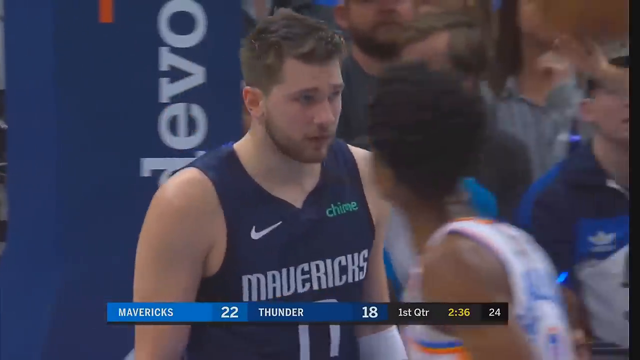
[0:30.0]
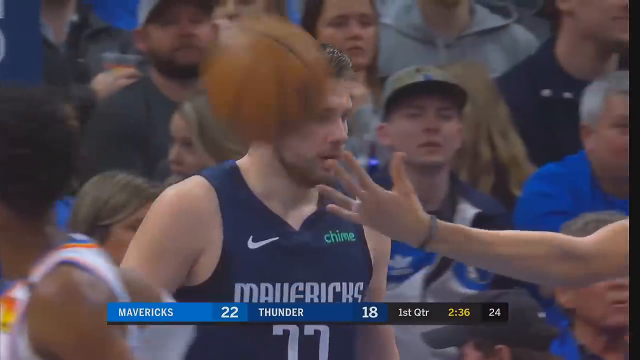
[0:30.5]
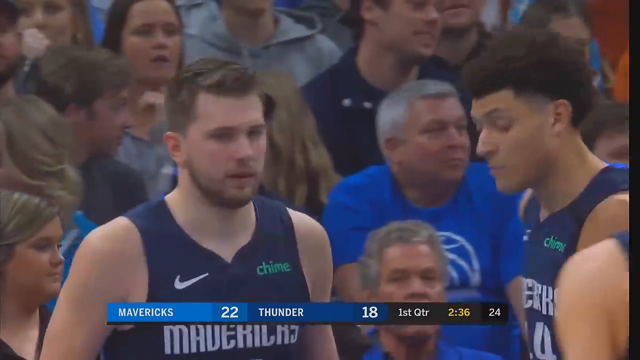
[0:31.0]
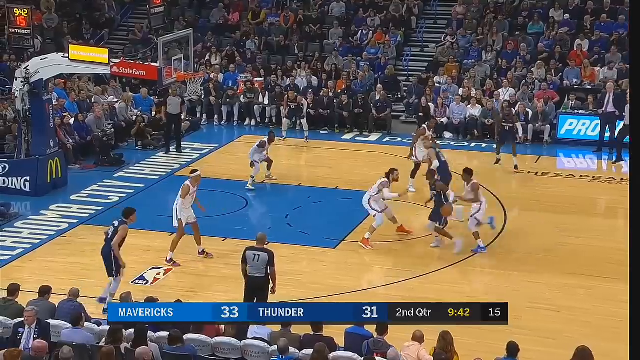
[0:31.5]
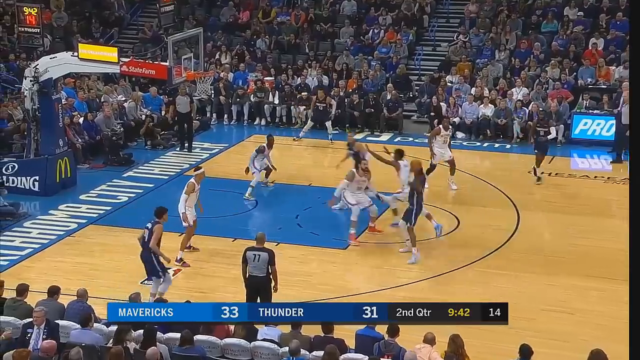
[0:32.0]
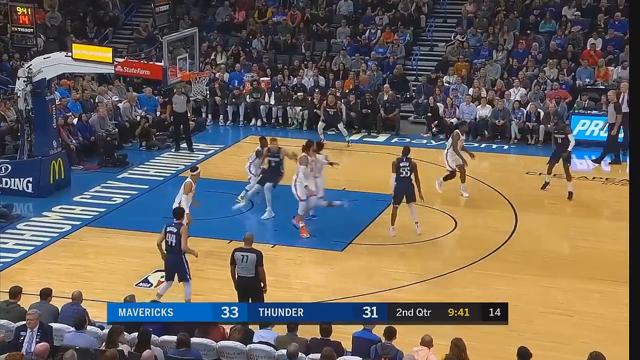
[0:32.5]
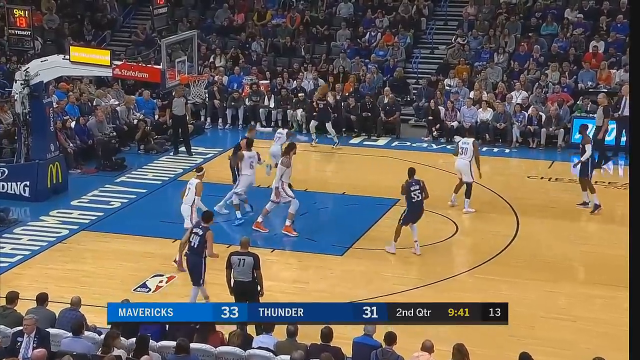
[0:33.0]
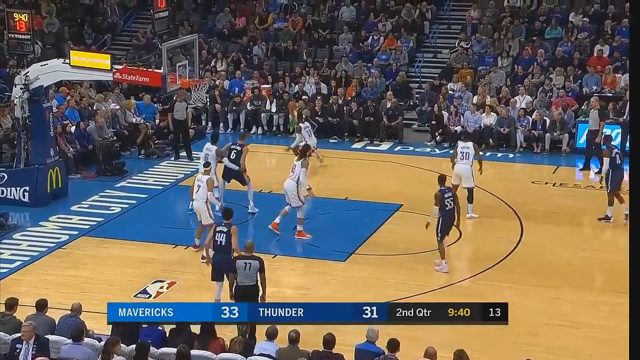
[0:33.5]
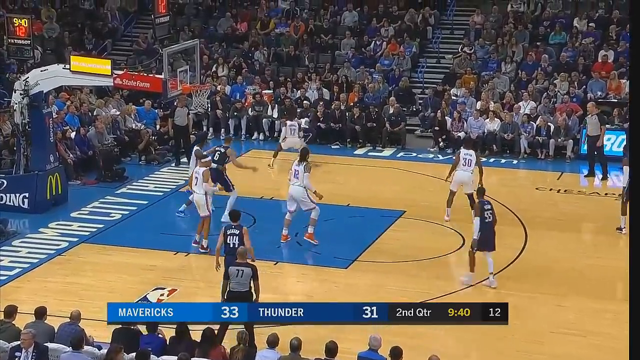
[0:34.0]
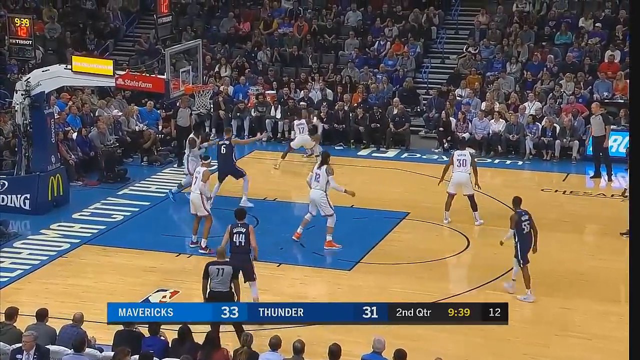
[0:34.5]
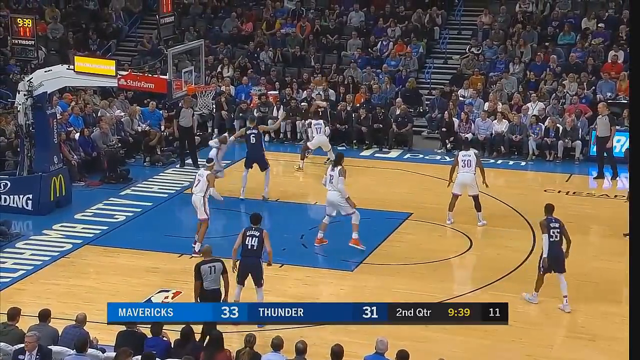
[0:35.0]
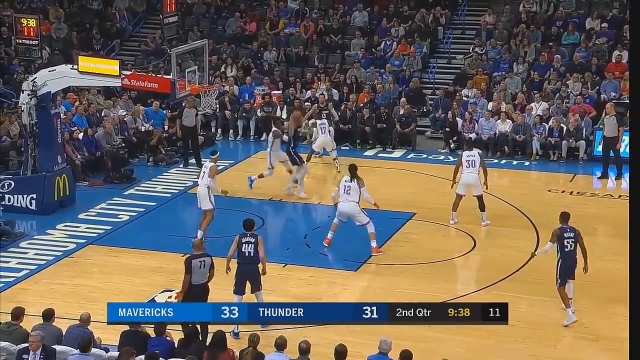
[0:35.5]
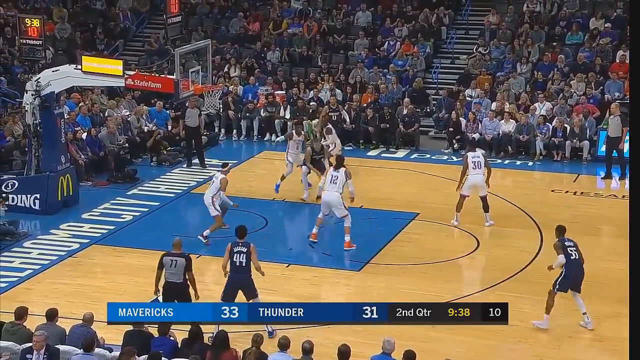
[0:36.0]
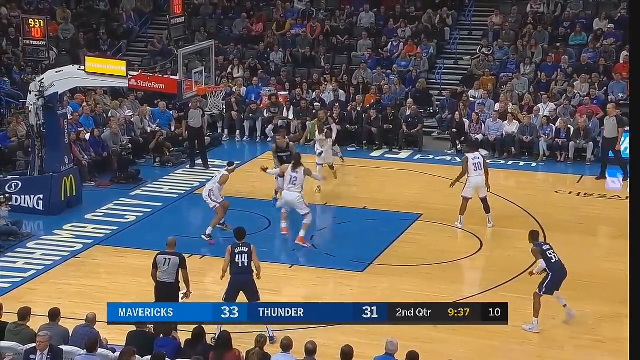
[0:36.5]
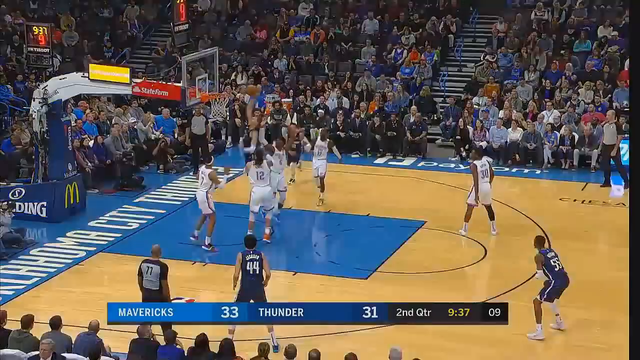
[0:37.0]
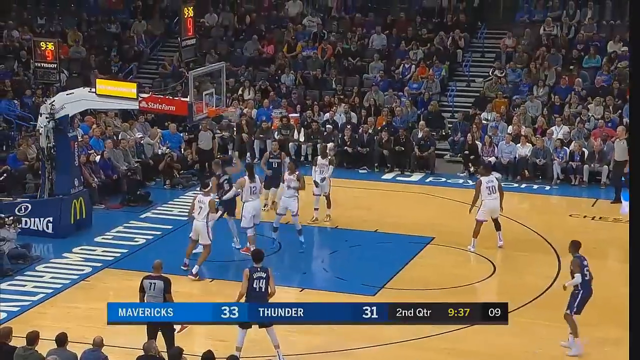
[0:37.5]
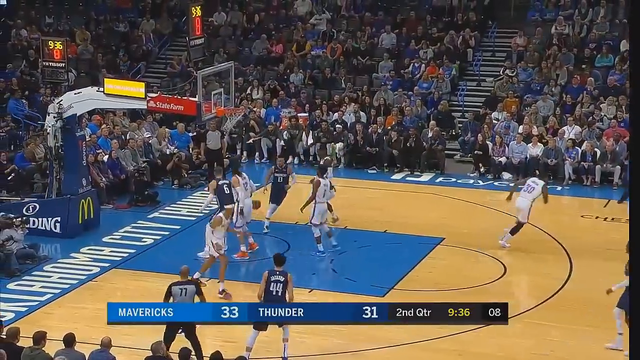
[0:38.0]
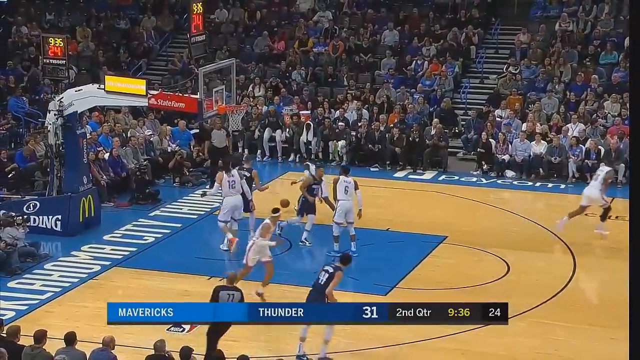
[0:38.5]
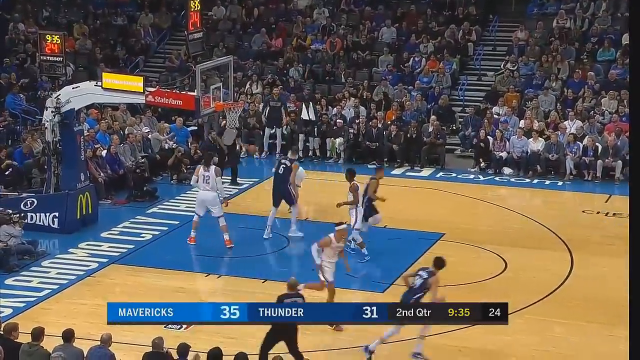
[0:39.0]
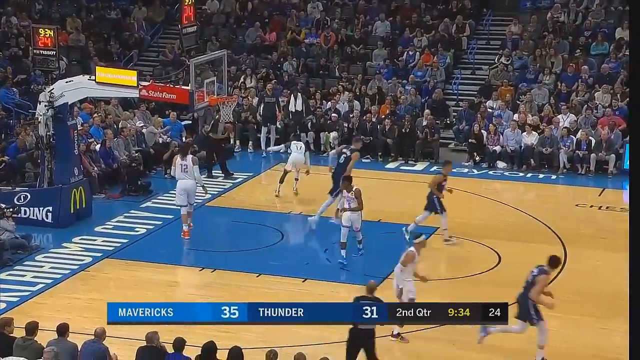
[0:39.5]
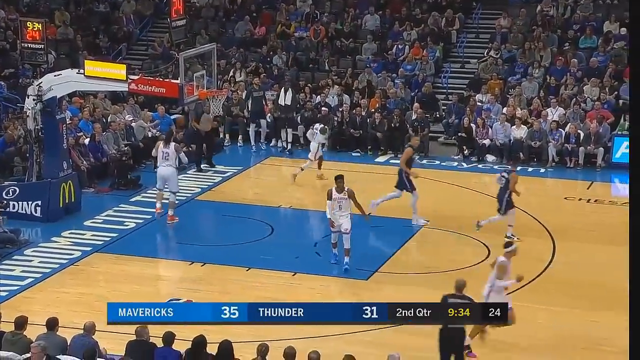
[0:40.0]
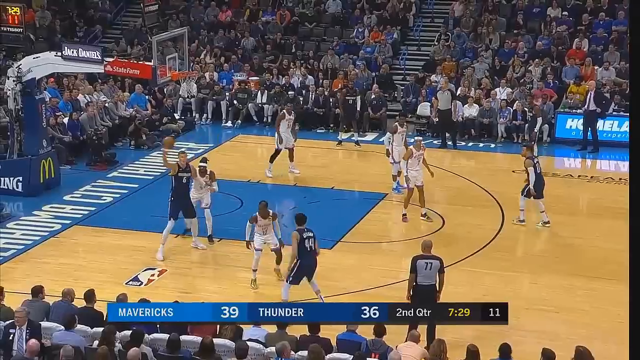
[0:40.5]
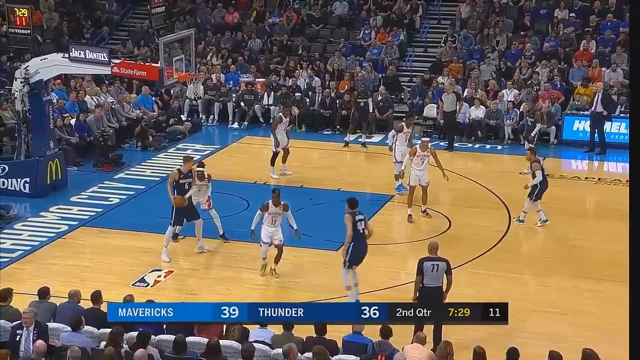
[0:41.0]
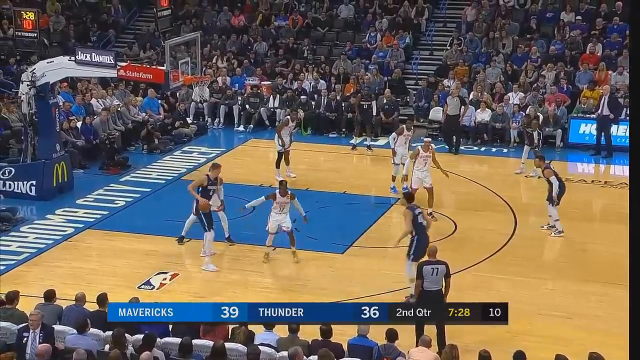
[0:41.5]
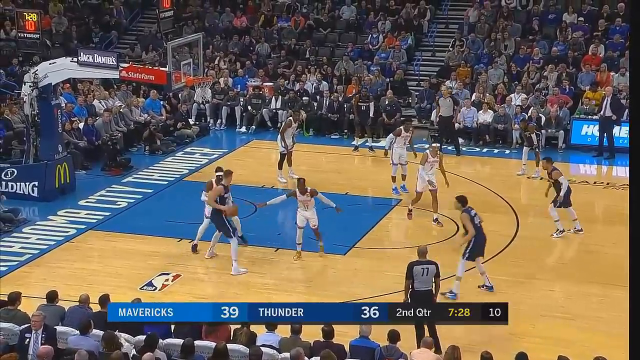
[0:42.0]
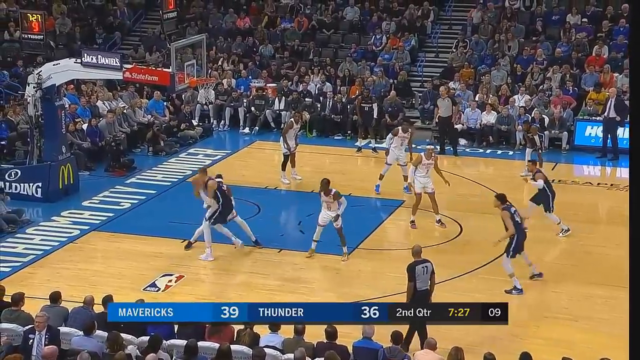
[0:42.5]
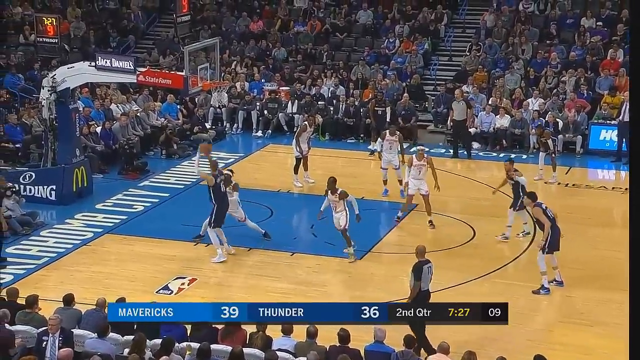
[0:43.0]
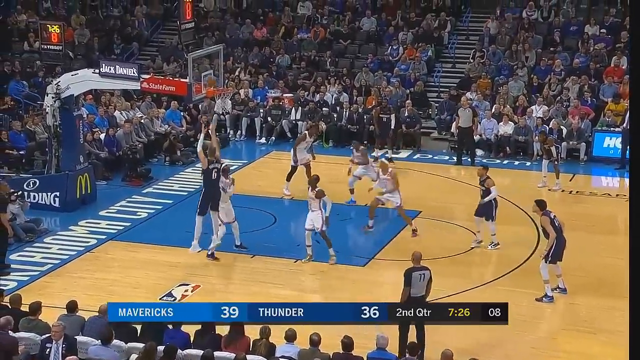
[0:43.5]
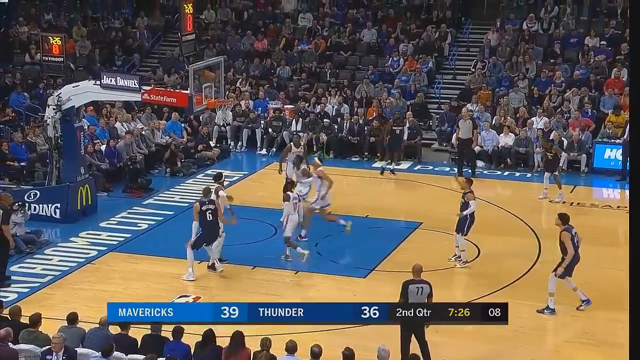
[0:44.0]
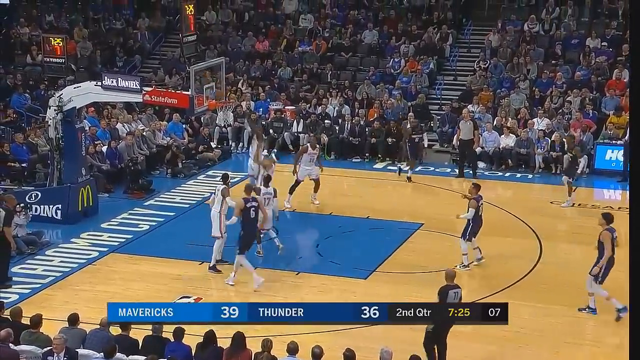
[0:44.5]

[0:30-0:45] A close-up shows Doncic, who appears slightly out of breath, walking slowly with some other players around him. The video then jumps further forward into the game. A pass is thrown from one Dallas player to another and then to Doncic in the center, where he scores, and then he scores yet again. Toward the end, the score is 35 to 31 with the Dallas Mavericks leading, in the second quarter with seven minutes left. The players are not running much and are sliding around a little; most are kind of just standing around in position and seem to be waiting for things to happen. The crowd seems relatively quiet, everyone is seated, and there is some polite clapping.